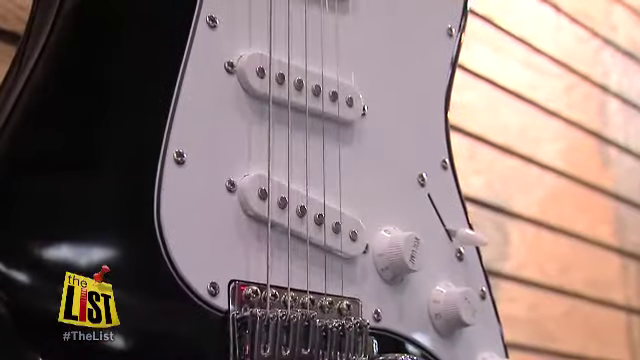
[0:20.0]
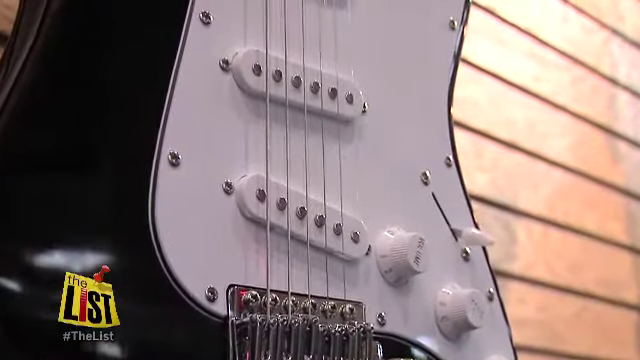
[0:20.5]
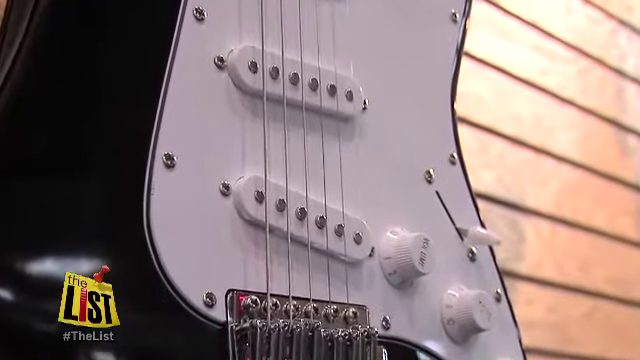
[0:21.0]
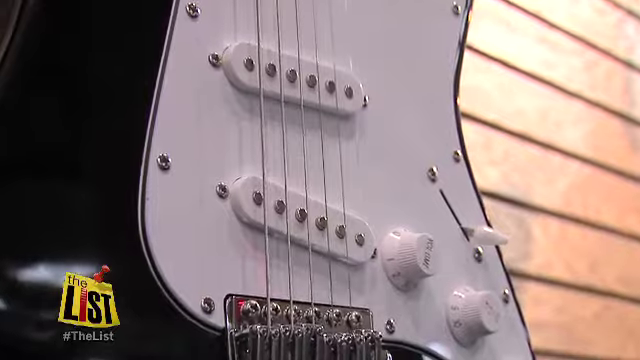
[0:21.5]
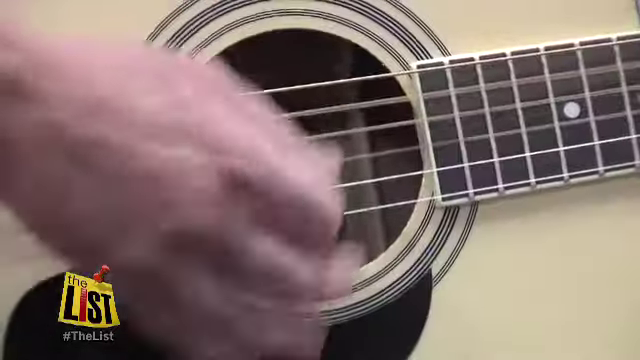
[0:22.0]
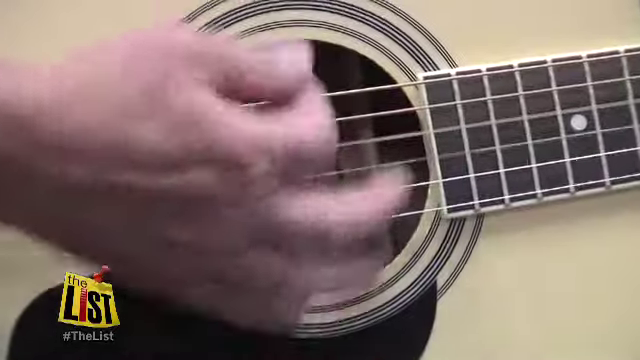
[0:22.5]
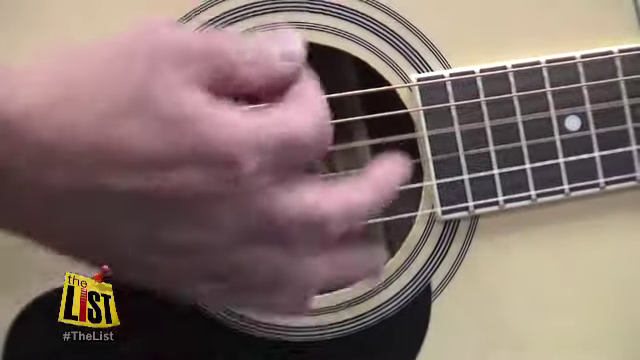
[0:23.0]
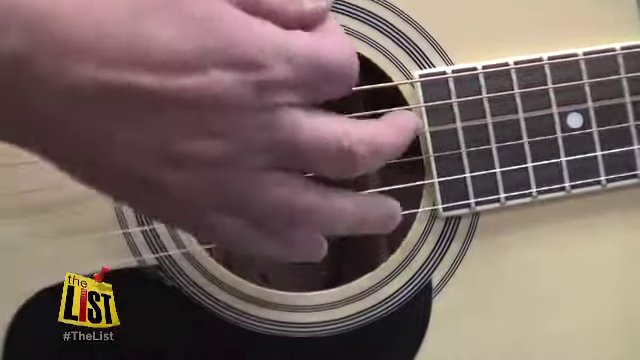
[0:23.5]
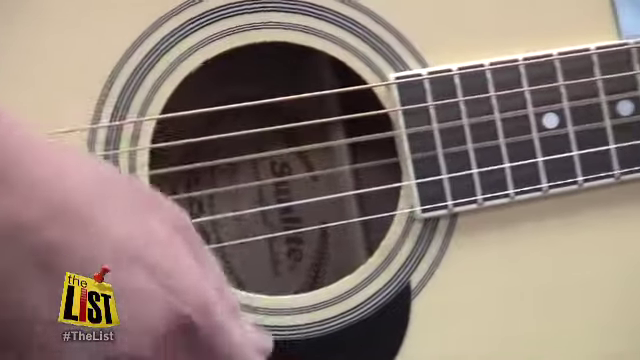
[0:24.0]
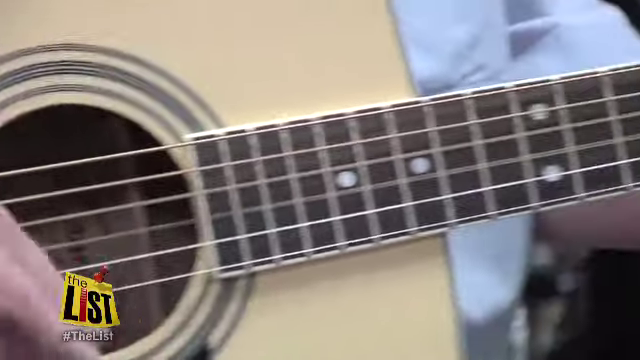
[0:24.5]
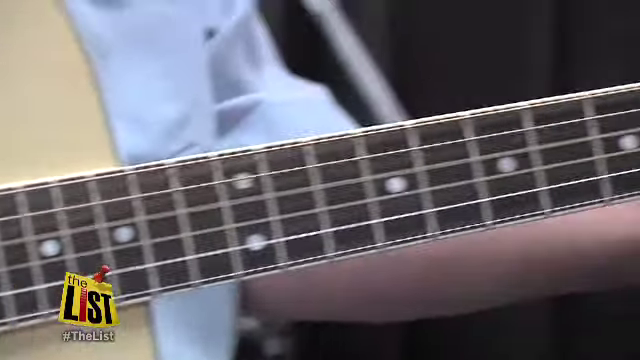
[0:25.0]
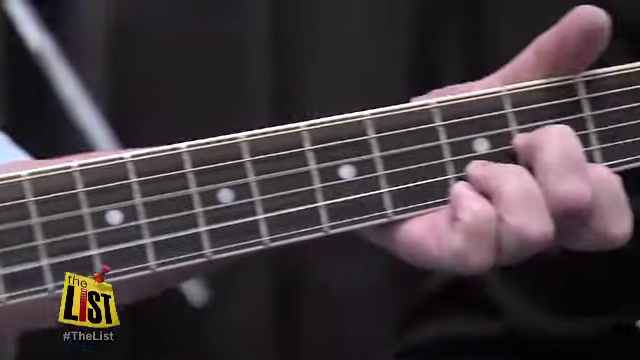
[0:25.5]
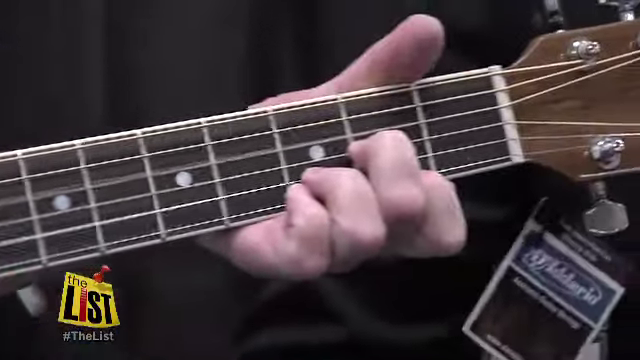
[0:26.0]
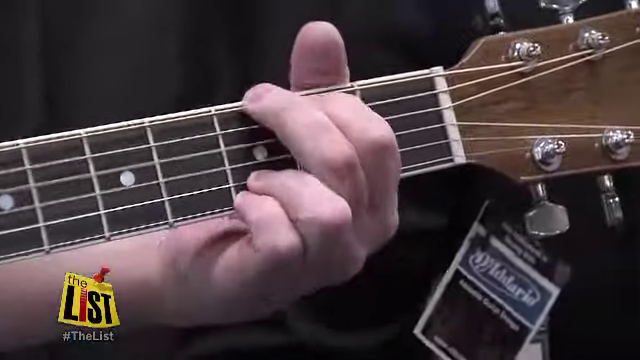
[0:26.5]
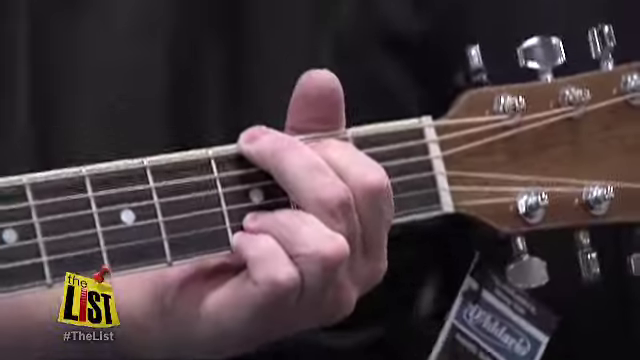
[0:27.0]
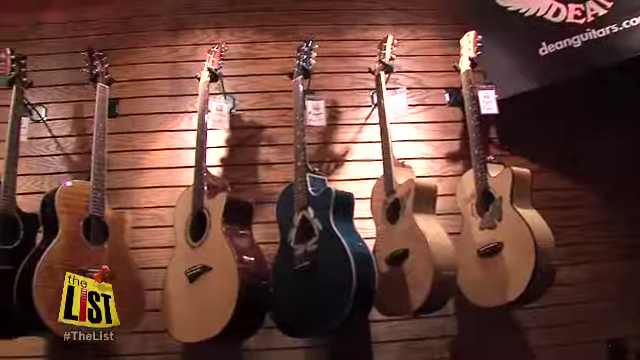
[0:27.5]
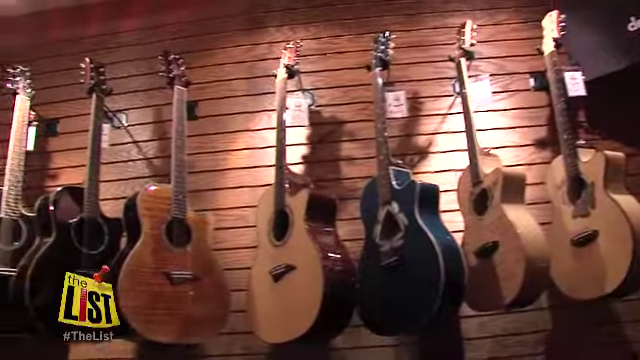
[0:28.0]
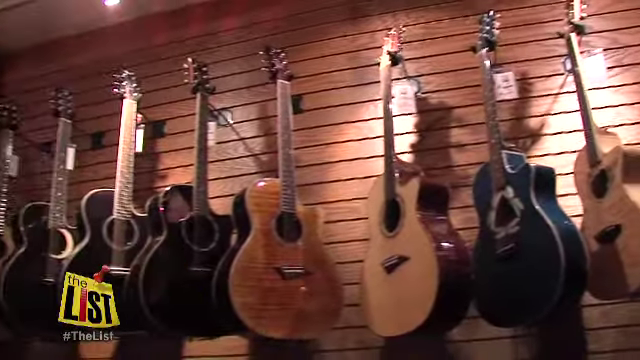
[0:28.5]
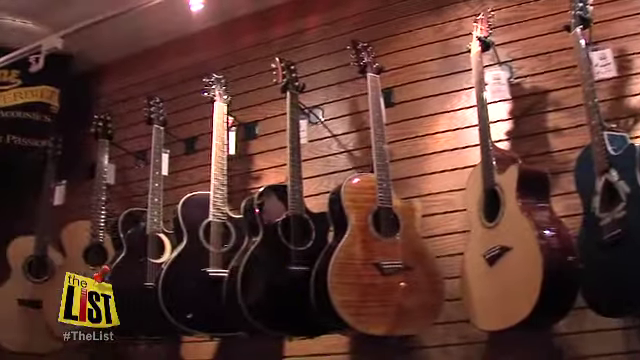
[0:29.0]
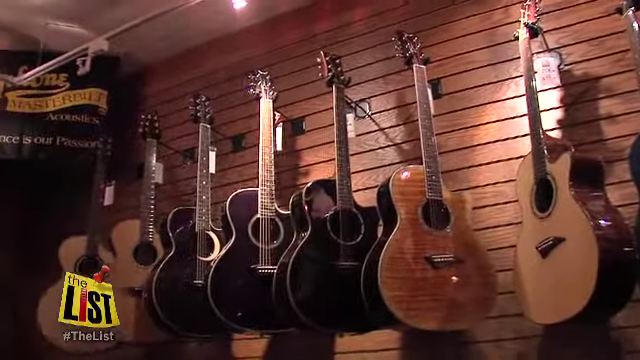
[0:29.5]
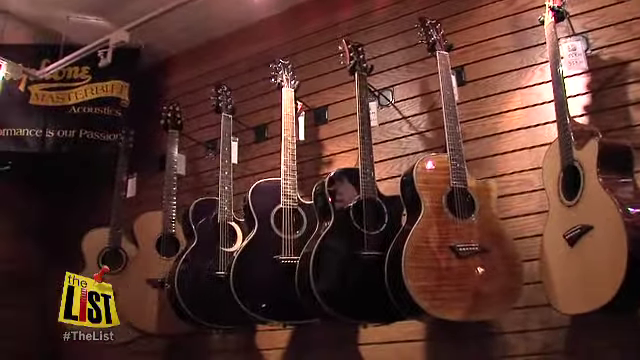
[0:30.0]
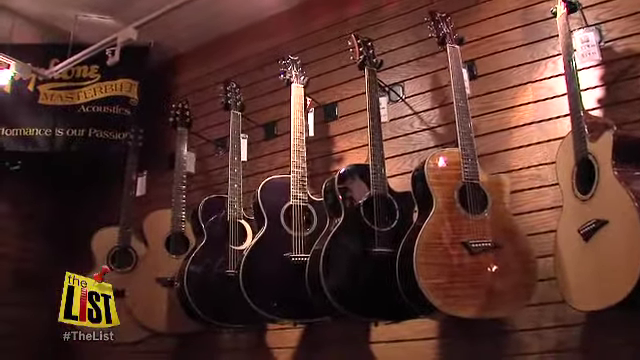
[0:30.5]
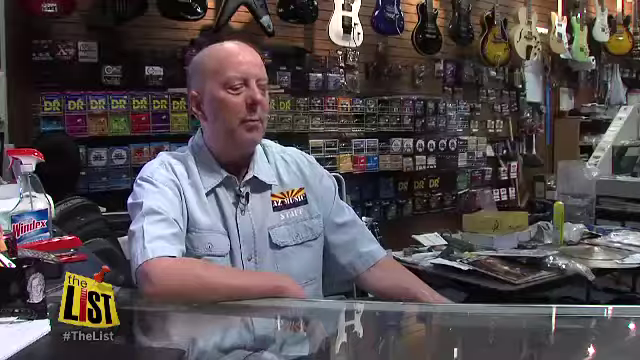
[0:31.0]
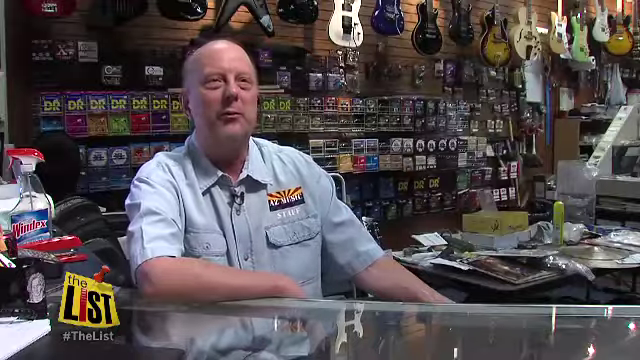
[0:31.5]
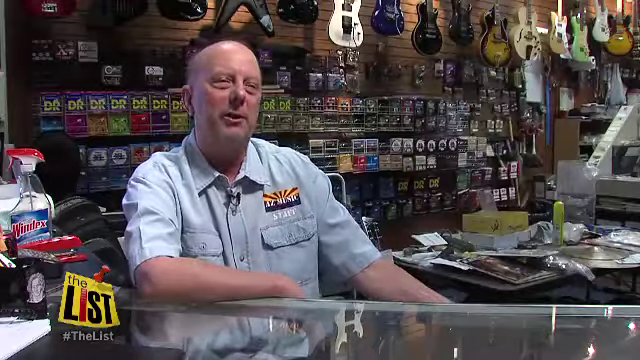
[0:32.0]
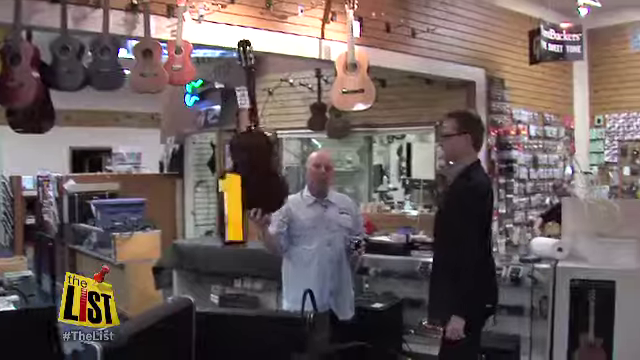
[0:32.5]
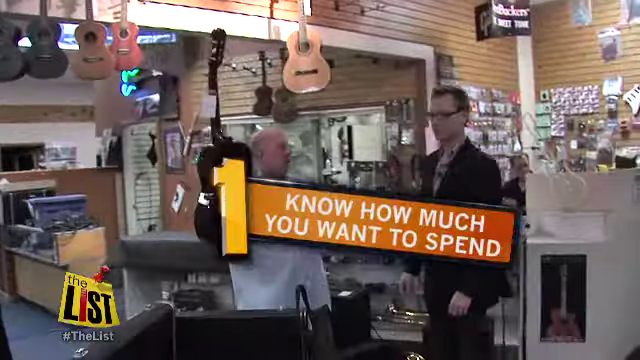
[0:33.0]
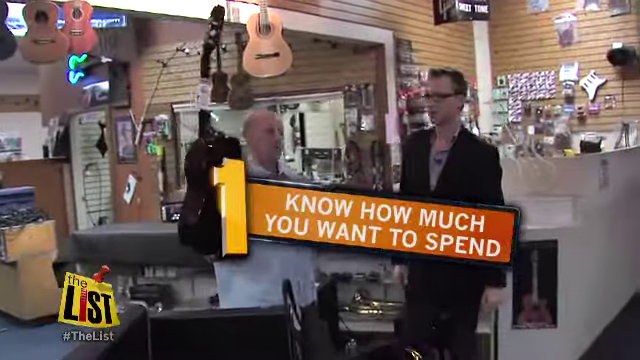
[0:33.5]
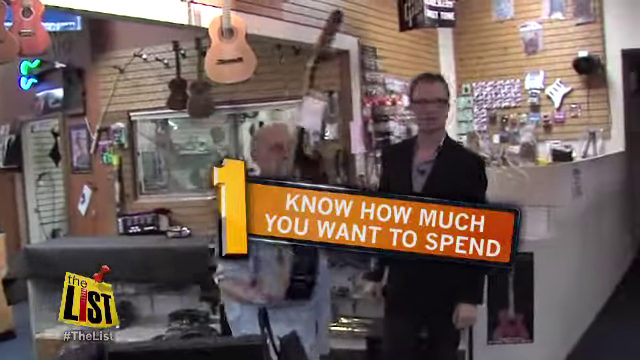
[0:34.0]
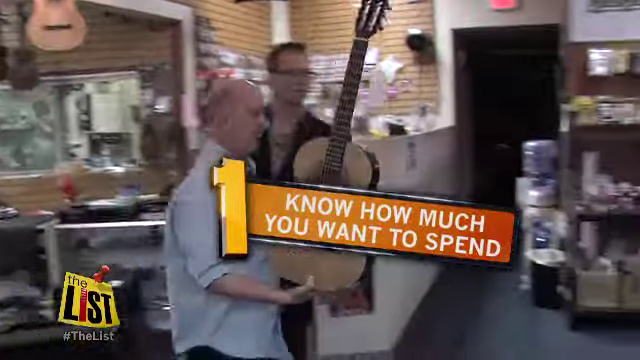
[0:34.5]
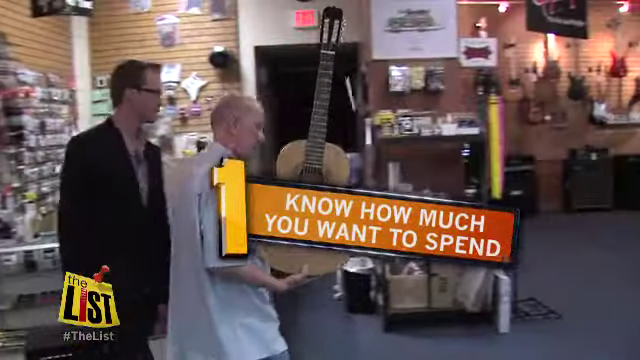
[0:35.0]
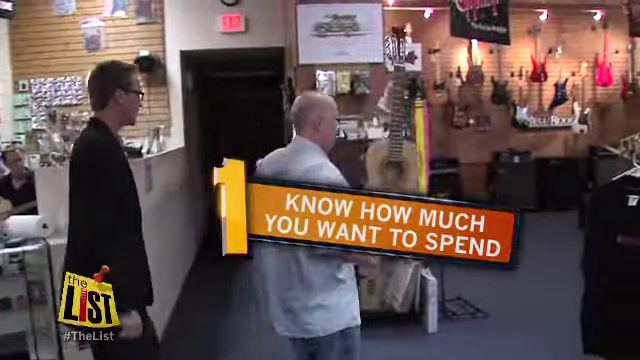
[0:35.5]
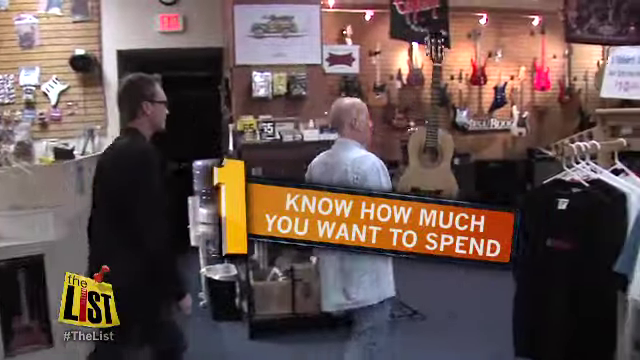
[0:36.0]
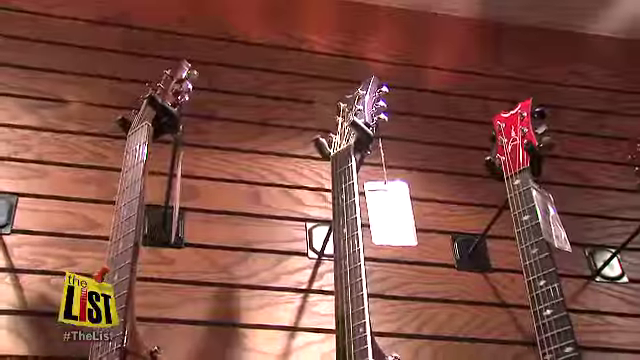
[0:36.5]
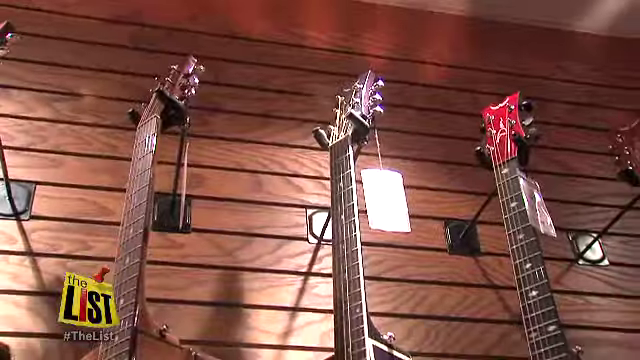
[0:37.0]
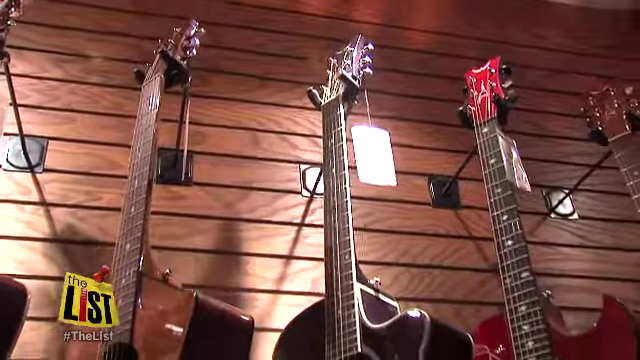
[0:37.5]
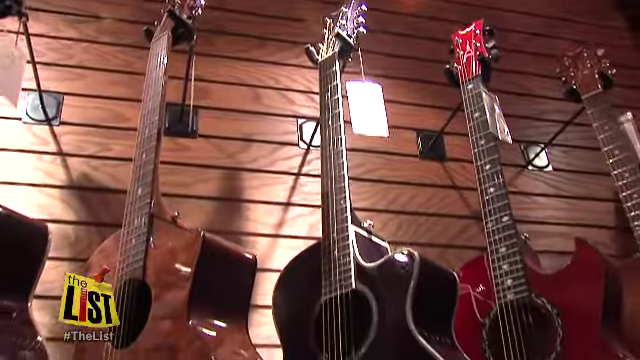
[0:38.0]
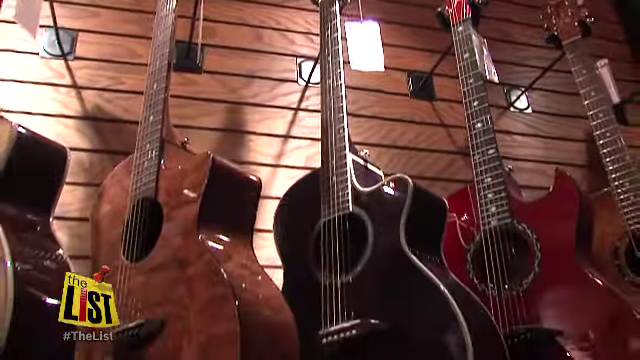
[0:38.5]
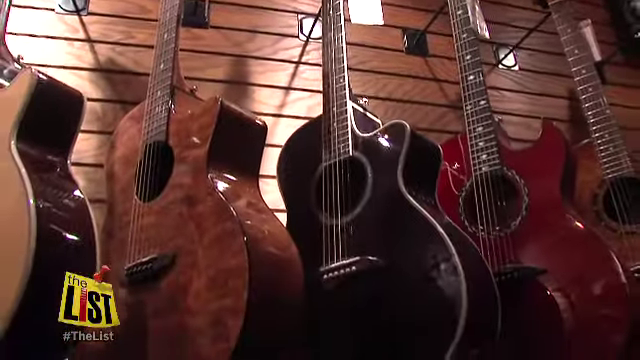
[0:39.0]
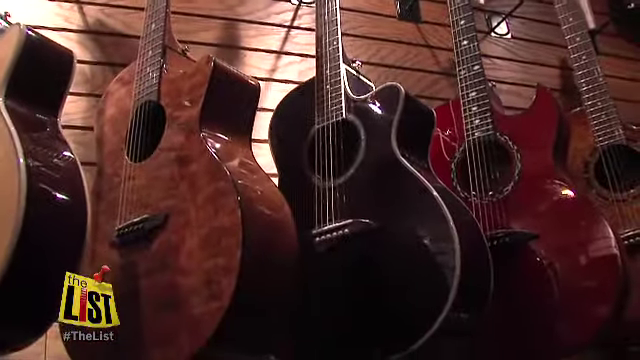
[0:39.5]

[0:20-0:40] A story from a social media or news site is shown, with a logo in the lower left corner: a yellow rectangle with a red pushpin that reads "the list." The word "the" is in small black text, and "list" is in bold, with the "l" in black, the "i" in red and the "st" in black. A close-up shows an electric guitar, opening on the strings of a black and white guitar, and then an acoustic guitar being played fairly close up, with Caucasian hands strumming the strings. Suddenly two people appear in the music store: a bald older gentleman in his 60s grabbing a guitar, and a younger man who is apparently Matt. The number one pops up with white text reading "know how much you want to spend"; it seems to be giving instructions on what to do when purchasing a guitar. The camera then pans again to guitars hanging on a wall made of horizontally running wooden slats.